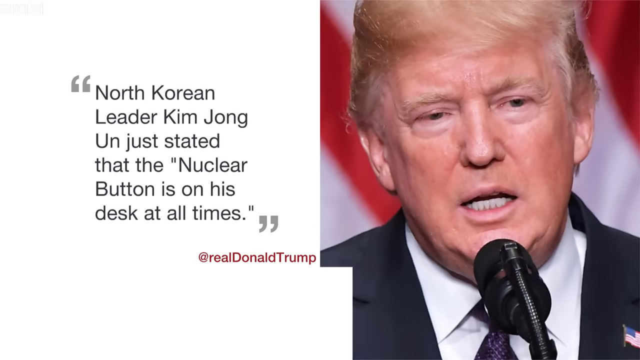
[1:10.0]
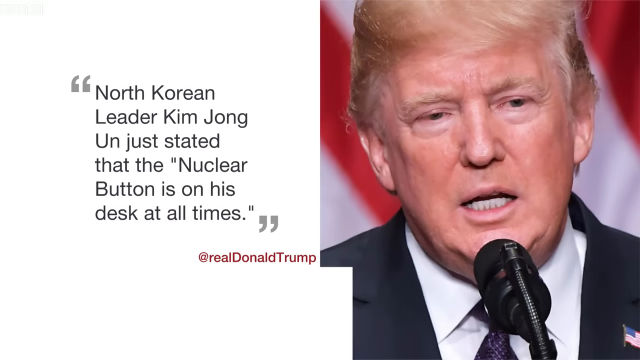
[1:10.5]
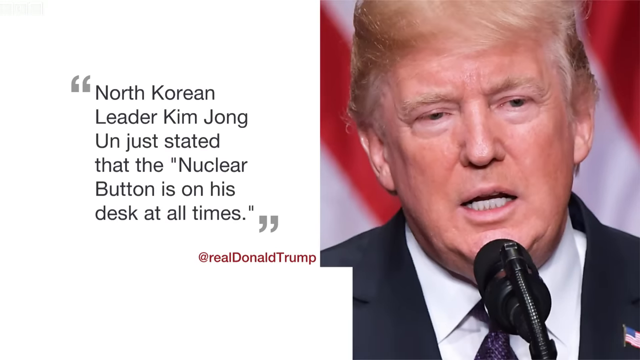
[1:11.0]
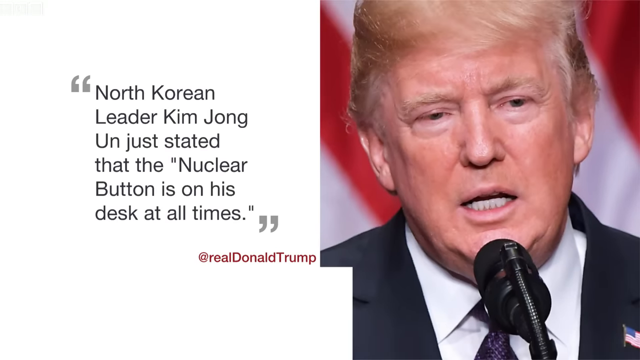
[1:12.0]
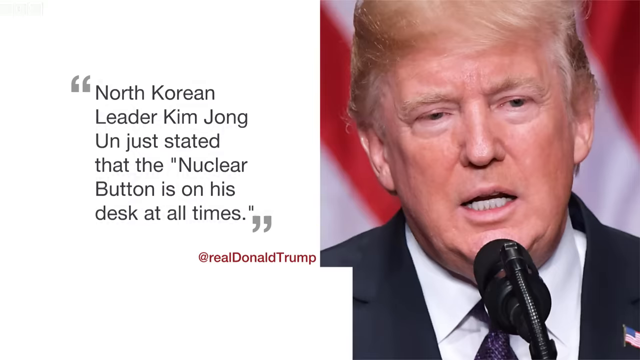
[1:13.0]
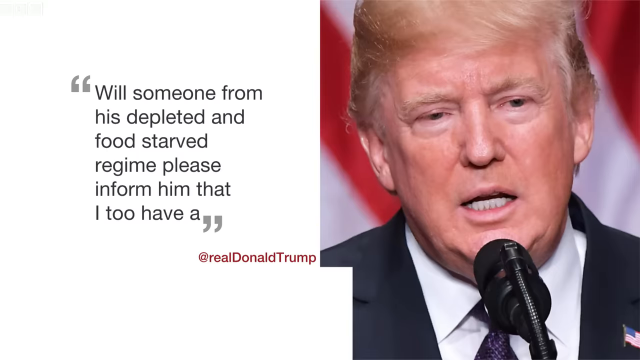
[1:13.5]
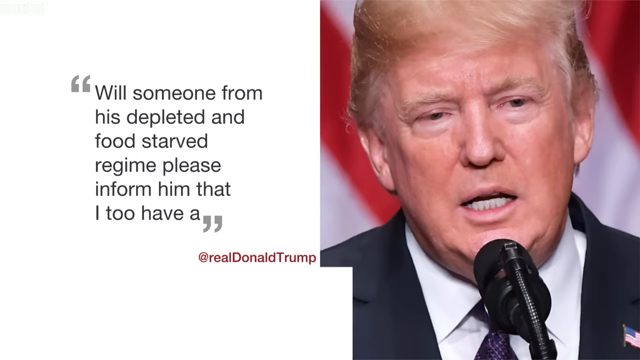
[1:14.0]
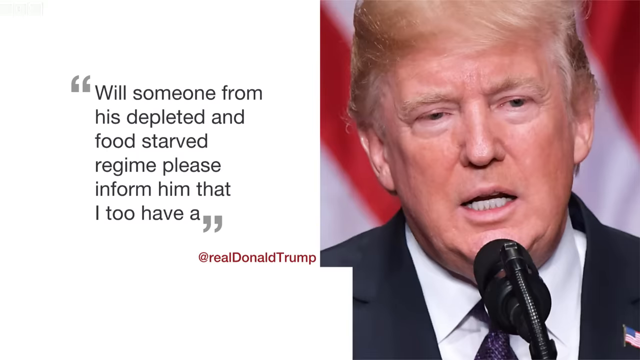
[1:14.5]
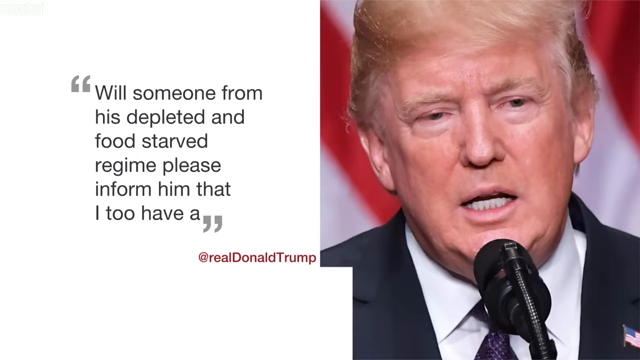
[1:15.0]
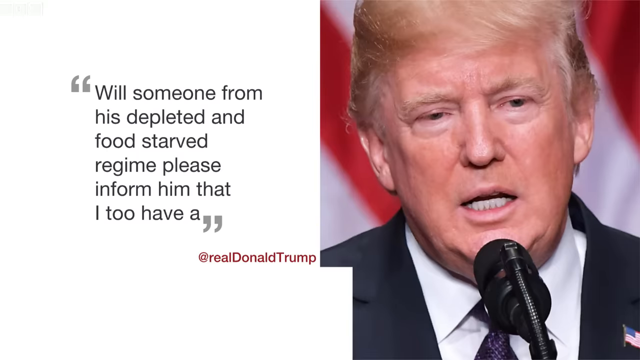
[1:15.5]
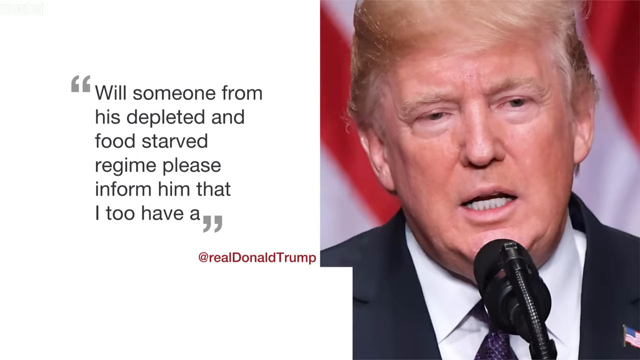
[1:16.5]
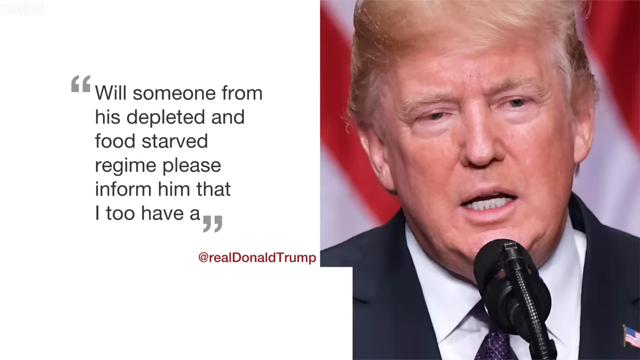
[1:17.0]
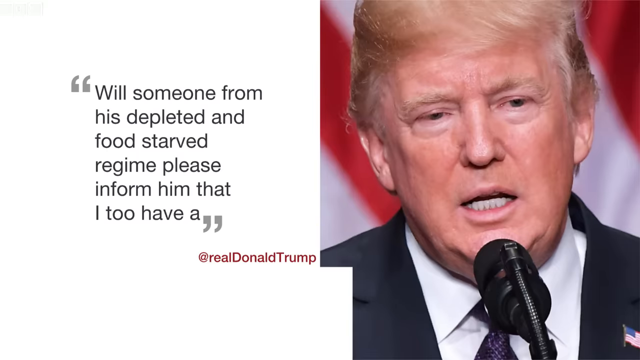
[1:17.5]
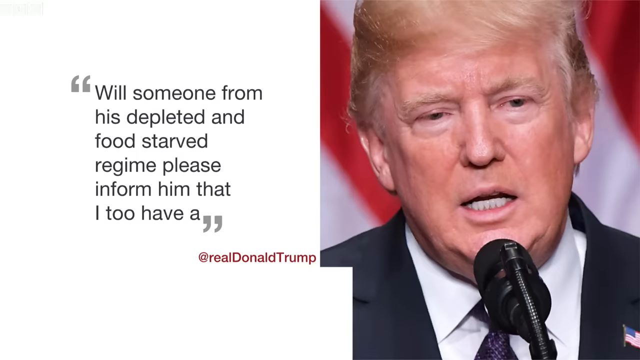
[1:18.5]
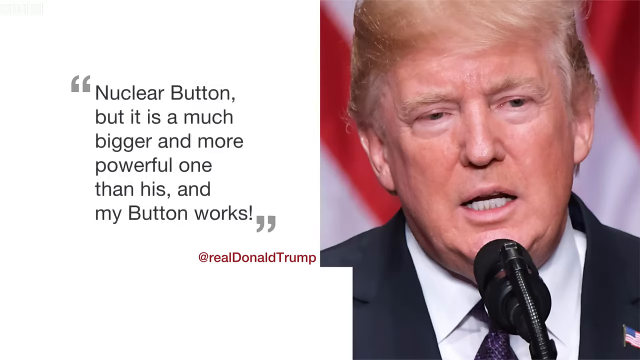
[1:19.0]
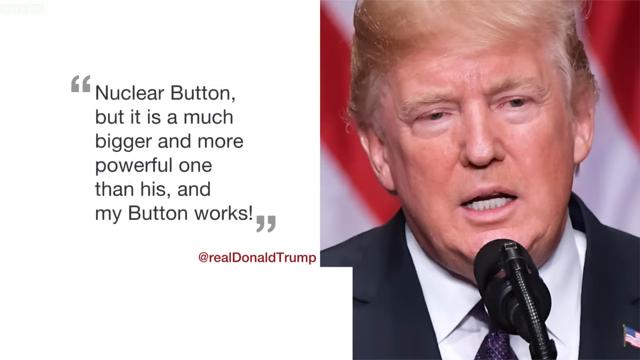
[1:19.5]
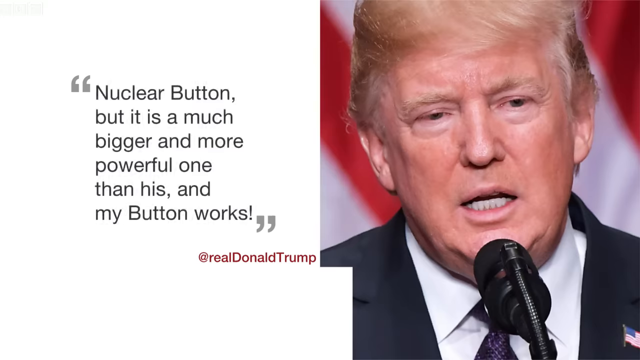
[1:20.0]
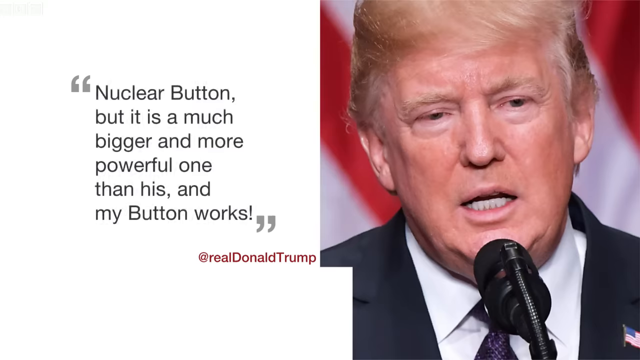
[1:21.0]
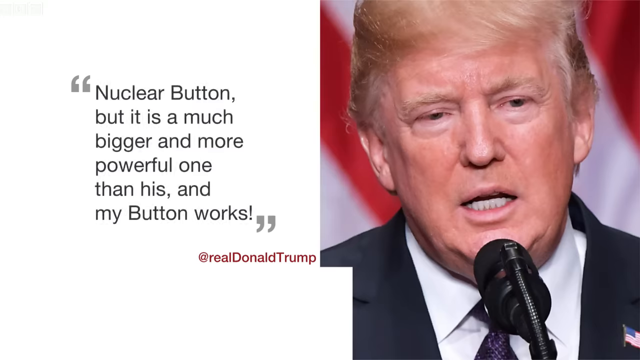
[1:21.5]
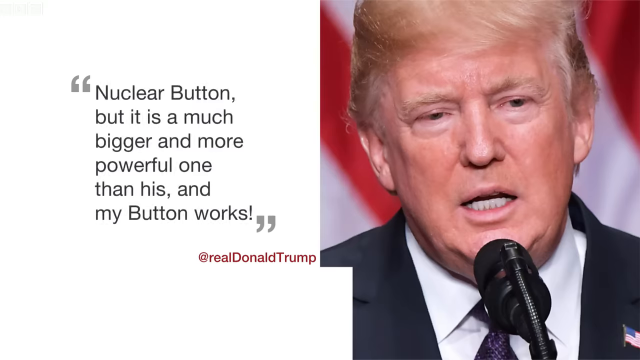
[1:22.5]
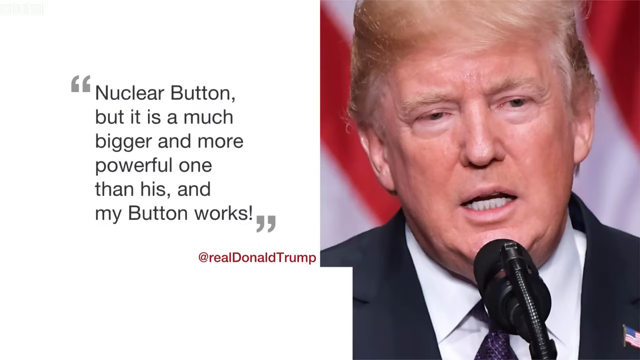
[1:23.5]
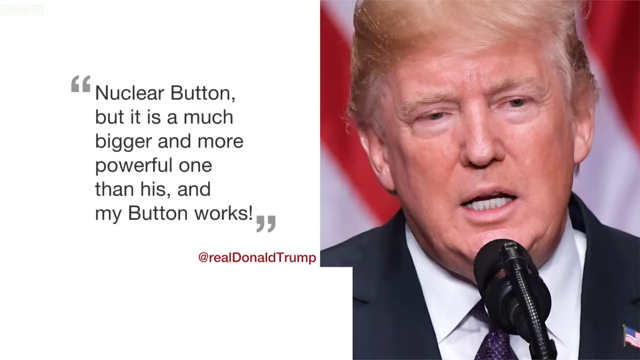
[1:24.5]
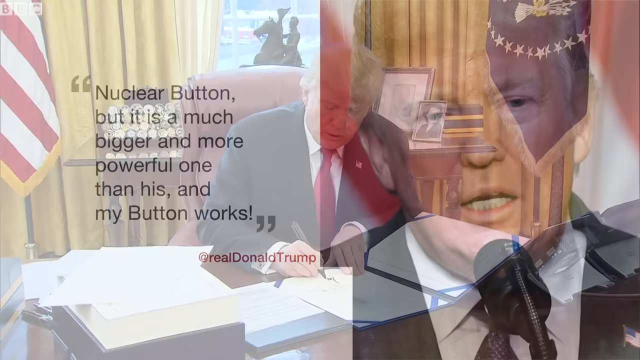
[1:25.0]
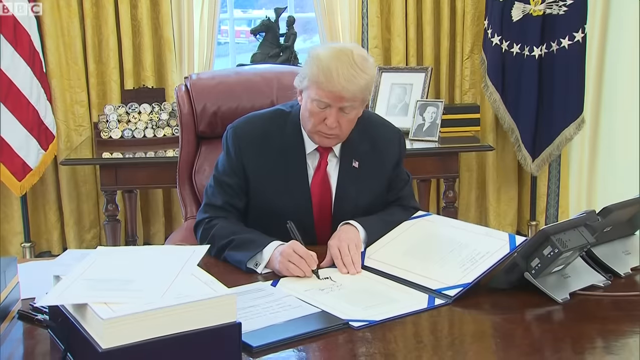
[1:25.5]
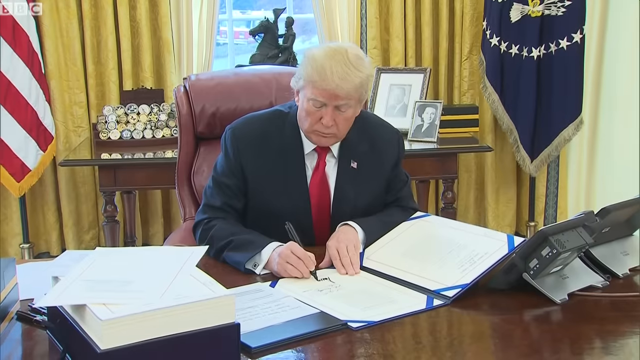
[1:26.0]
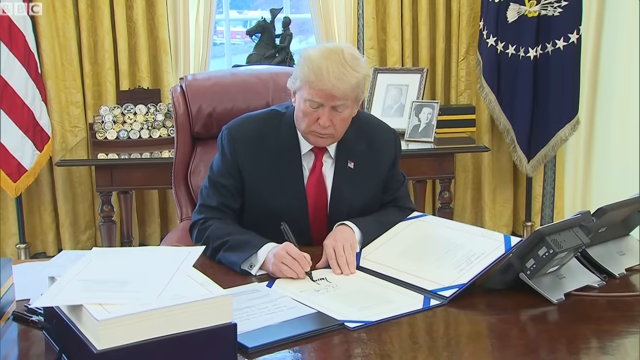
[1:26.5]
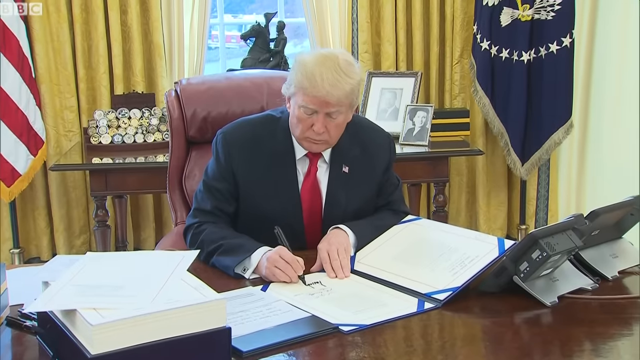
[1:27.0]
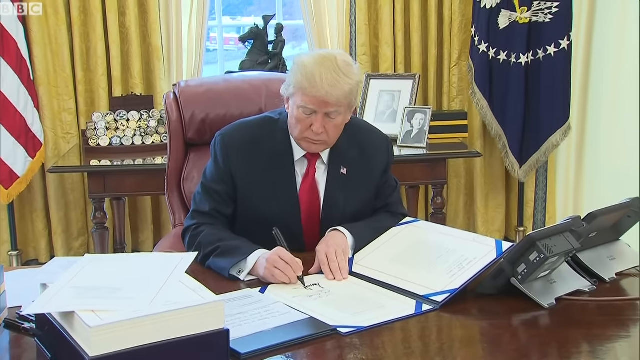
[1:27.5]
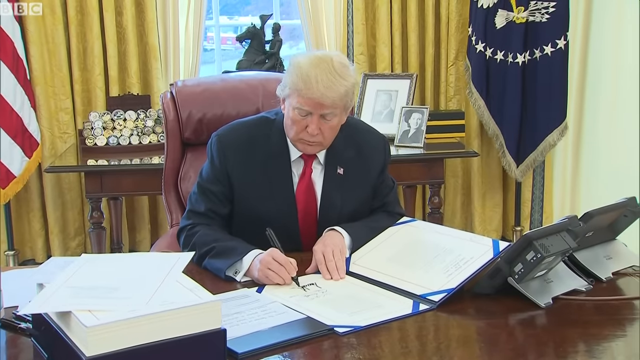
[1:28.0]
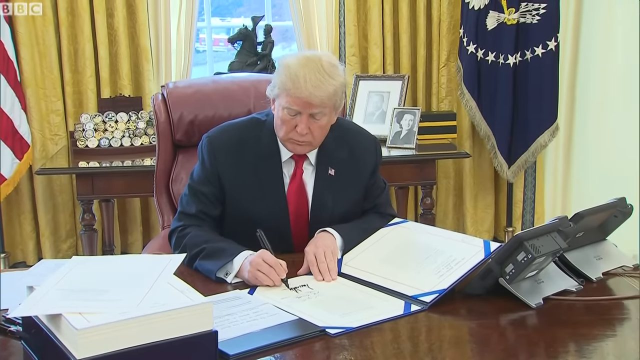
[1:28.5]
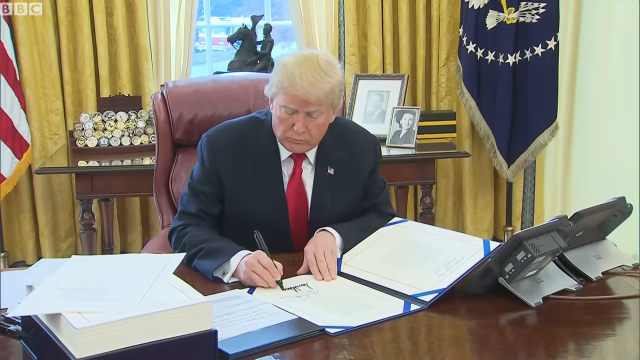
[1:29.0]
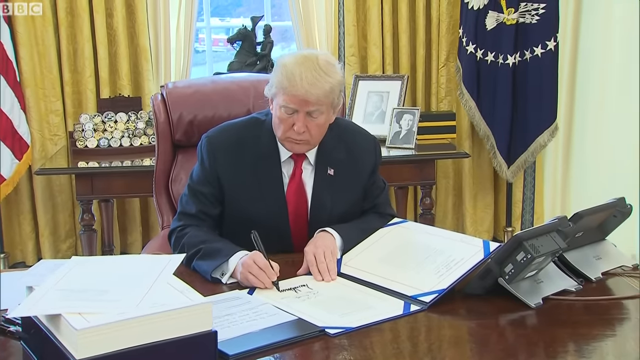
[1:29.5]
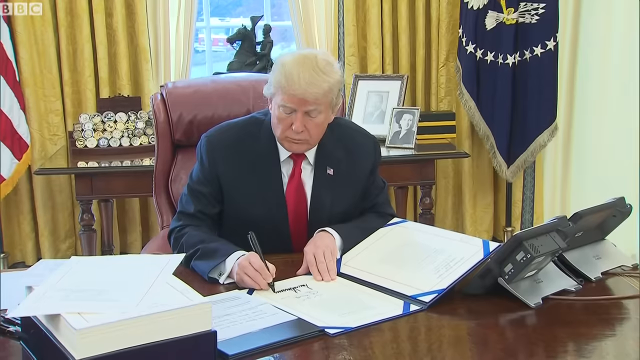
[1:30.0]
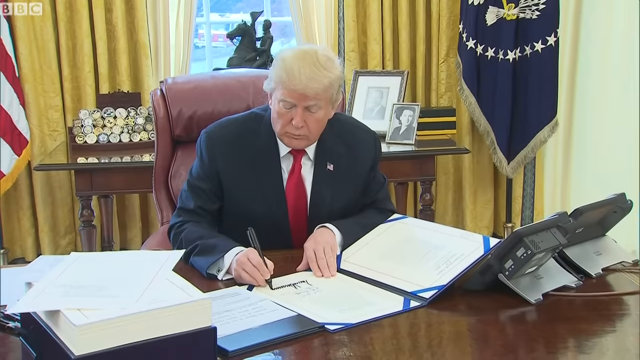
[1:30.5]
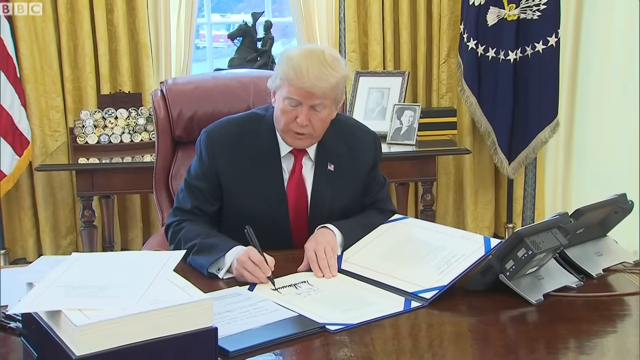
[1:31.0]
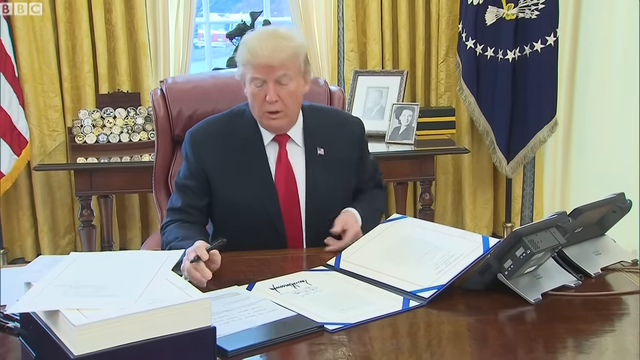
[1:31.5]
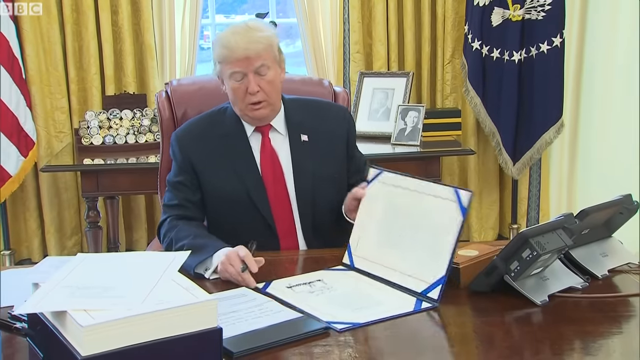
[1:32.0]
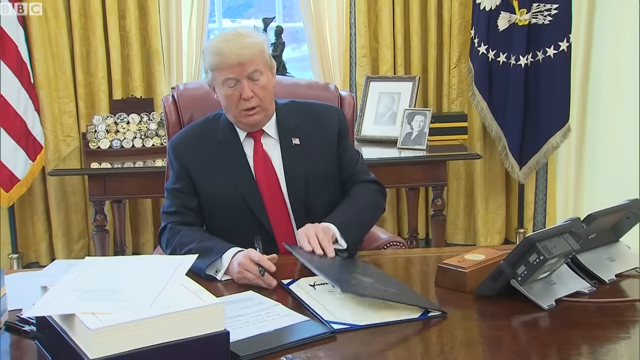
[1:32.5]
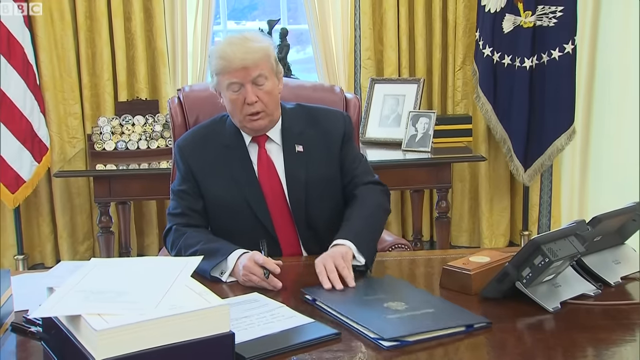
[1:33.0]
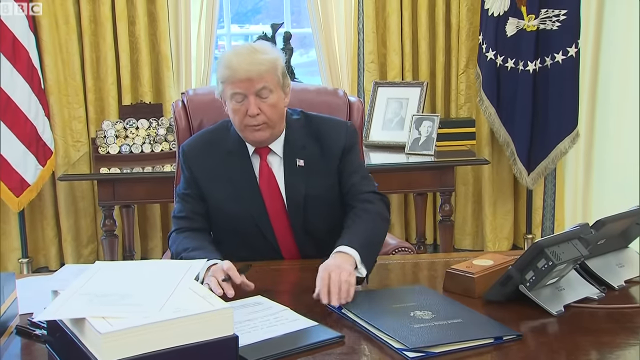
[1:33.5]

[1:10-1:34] A close-up picture of Donald Trump's face talking into a microphone is on the right side of a divided screen, while the other side has a white background showing extracts from his tweets. The first reads, "North Korean leader Kim Jong-un just stated that the nuclear bomb is on his desk at all times." It stays very briefly before a continuation from another tweet appears, reading, "Will someone from his depleted and food-starved regime please inform him that I too have a", followed very quickly by the rest of the text: "Nuclear button that it is a much bigger and more powerful one than his and my button works." The video then transitions to Donald Trump sitting at his desk in the Oval Office in the White House. Flags are behind him, one of them the American flag, along with a table with portraits and golden curtains. He has a folder open and is signing what seems to be a document. When he finishes signing, he closes the folder with his left hand and pushes it a bit away from him.